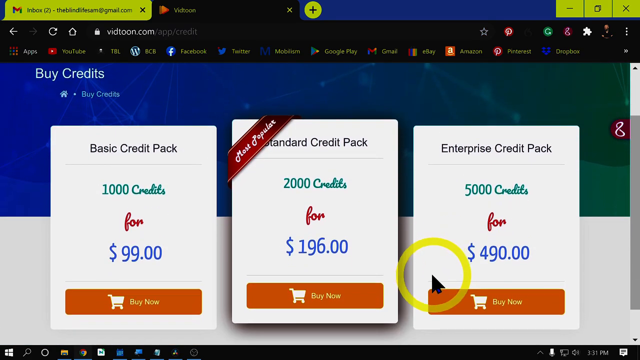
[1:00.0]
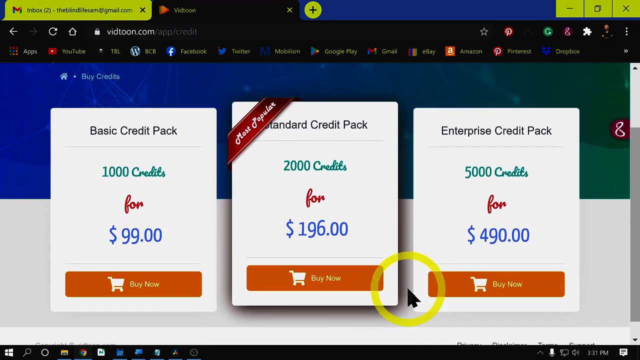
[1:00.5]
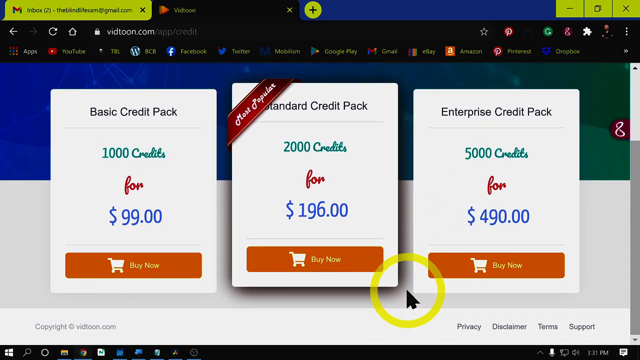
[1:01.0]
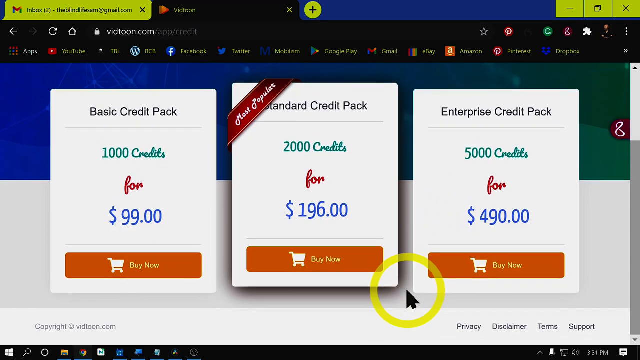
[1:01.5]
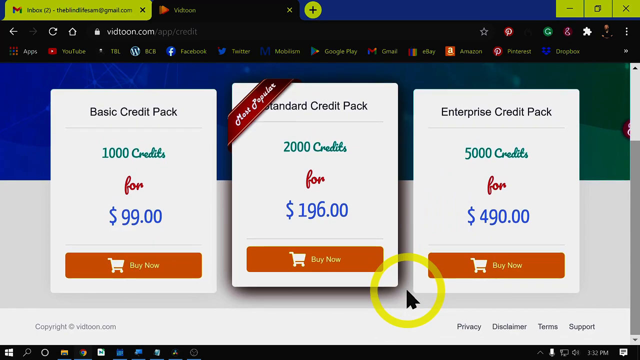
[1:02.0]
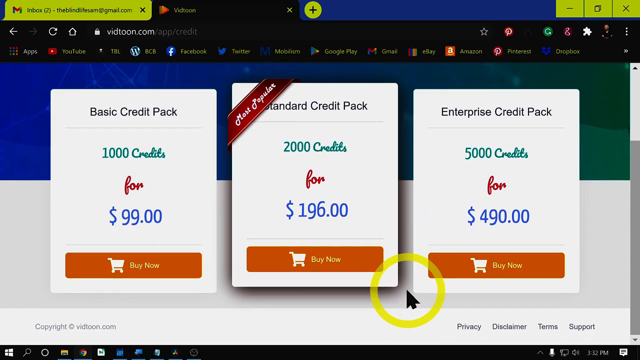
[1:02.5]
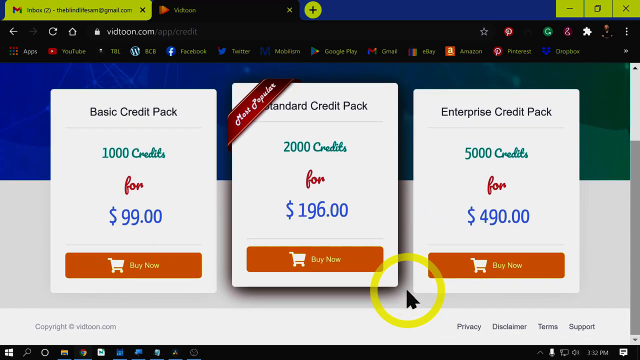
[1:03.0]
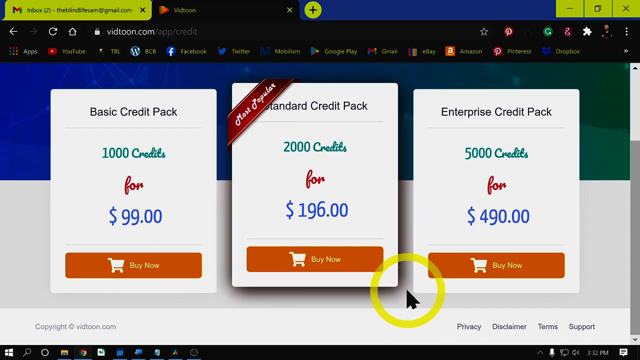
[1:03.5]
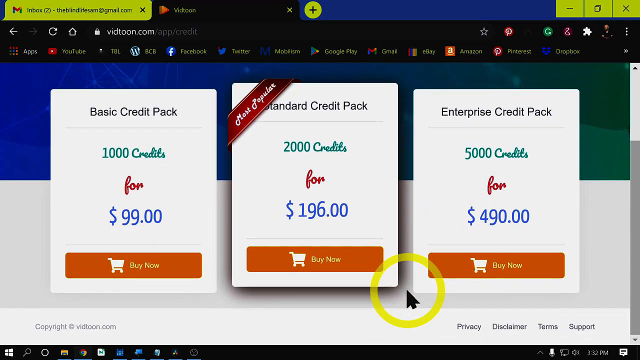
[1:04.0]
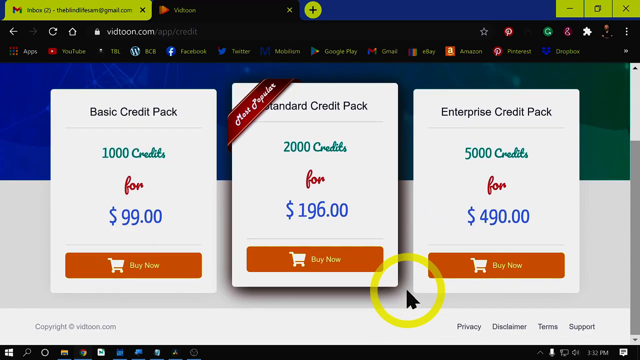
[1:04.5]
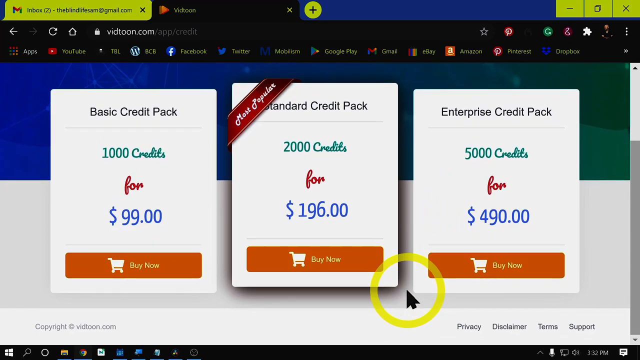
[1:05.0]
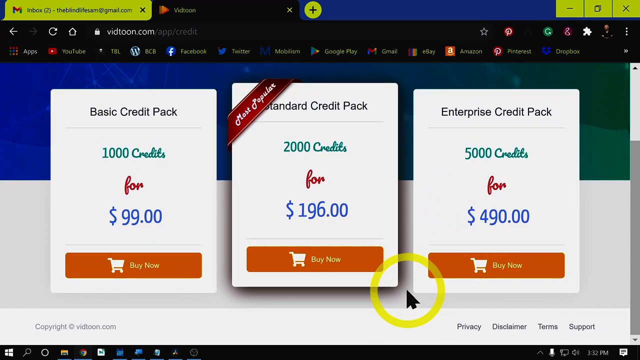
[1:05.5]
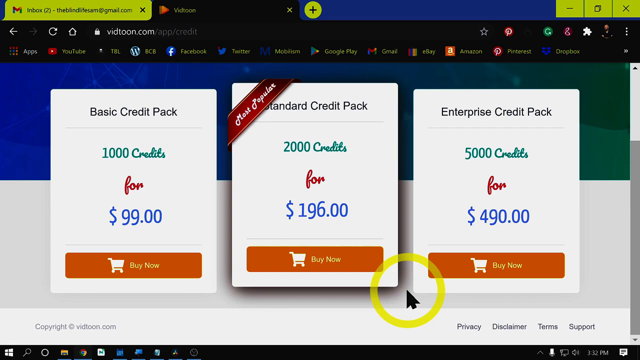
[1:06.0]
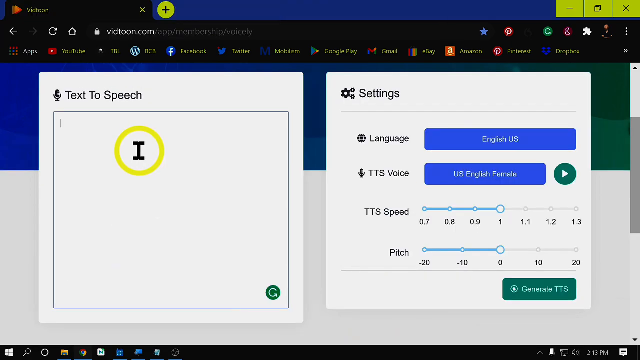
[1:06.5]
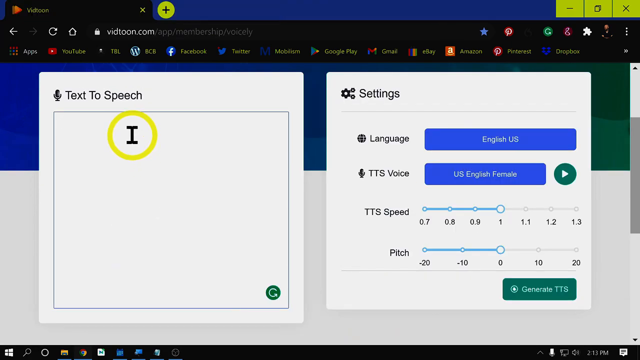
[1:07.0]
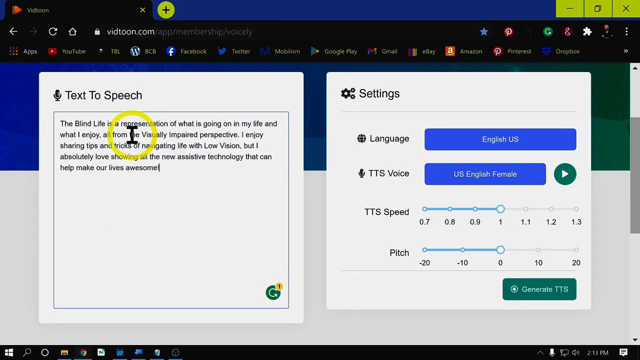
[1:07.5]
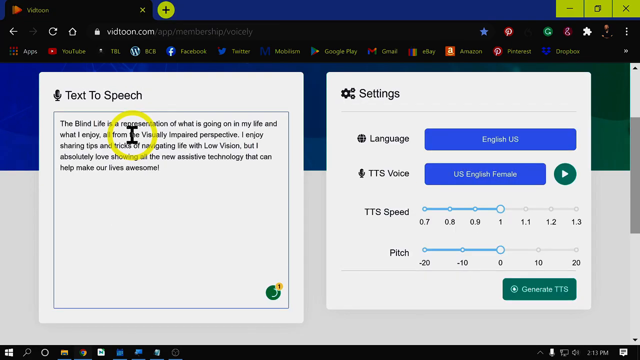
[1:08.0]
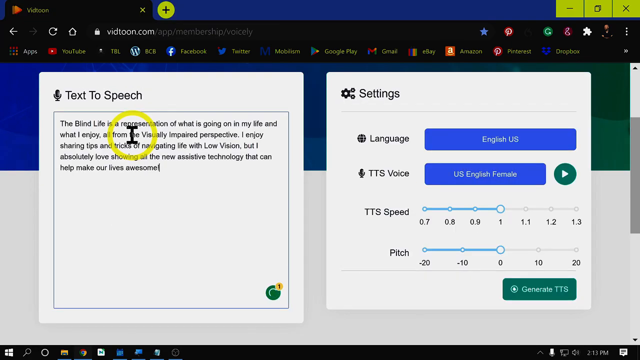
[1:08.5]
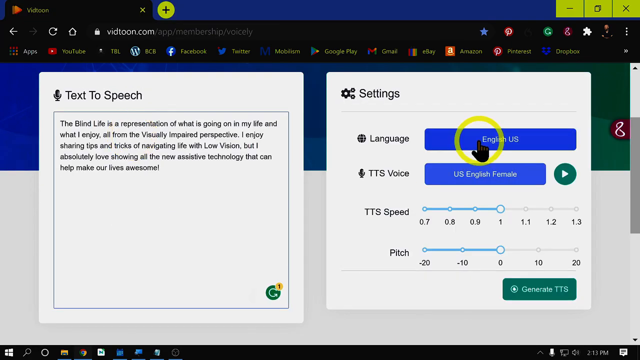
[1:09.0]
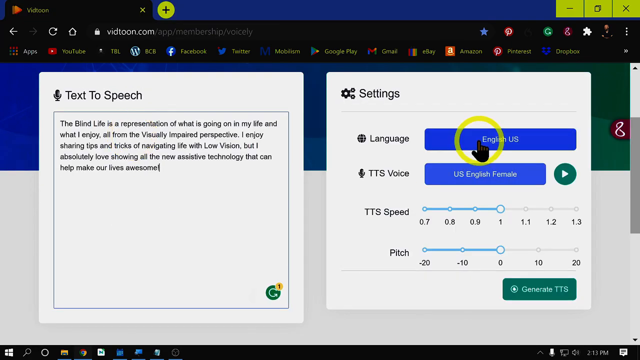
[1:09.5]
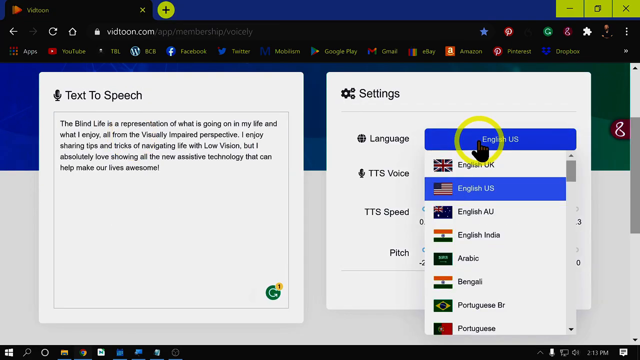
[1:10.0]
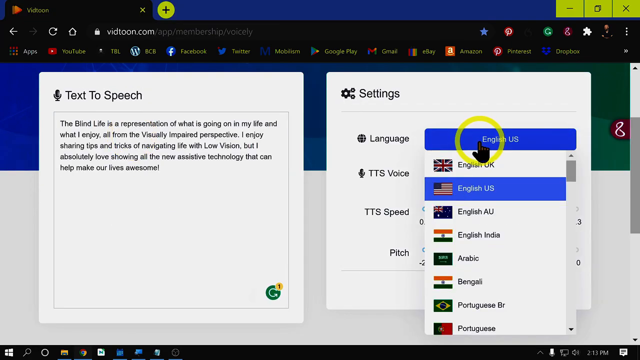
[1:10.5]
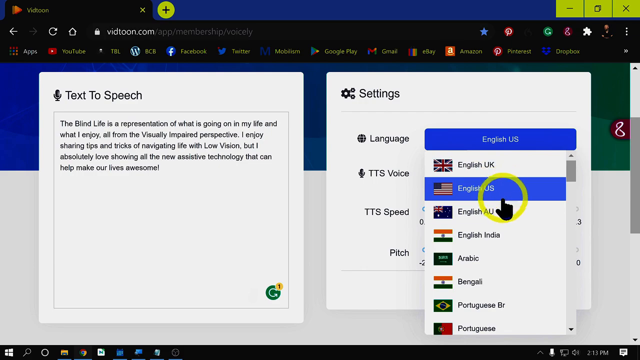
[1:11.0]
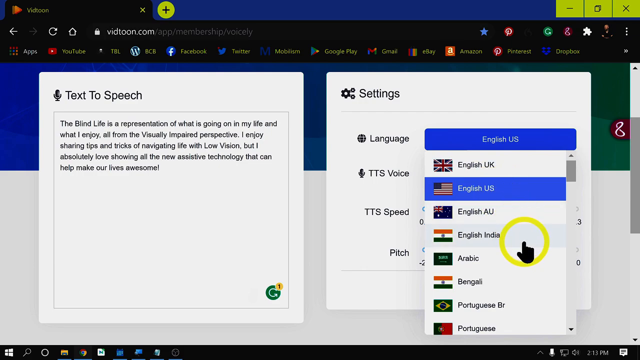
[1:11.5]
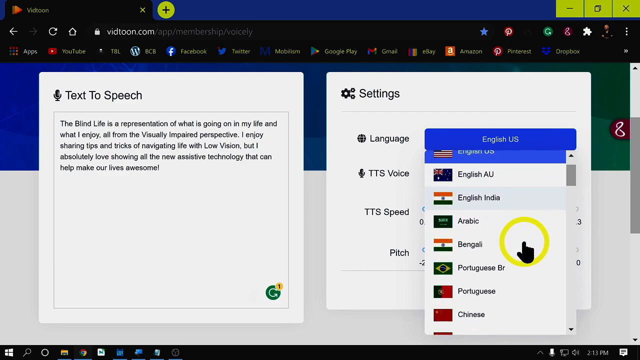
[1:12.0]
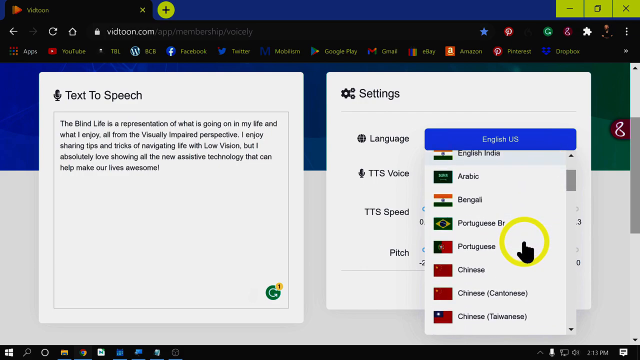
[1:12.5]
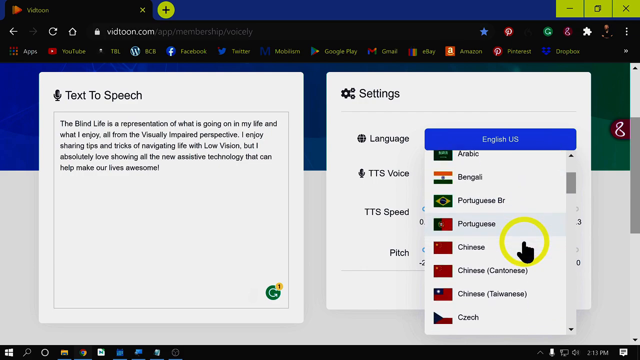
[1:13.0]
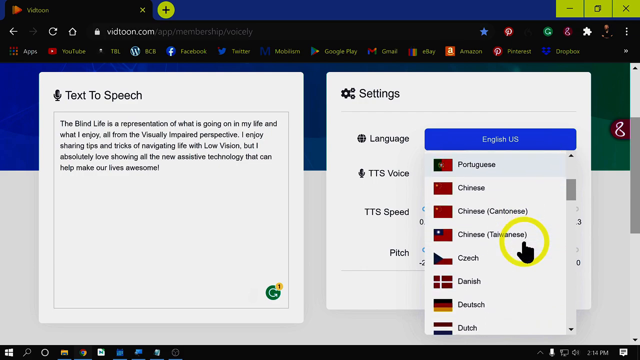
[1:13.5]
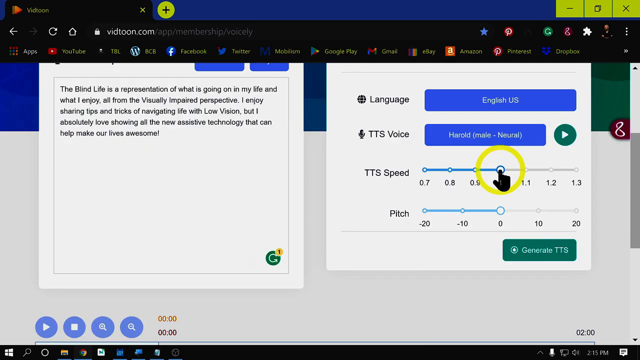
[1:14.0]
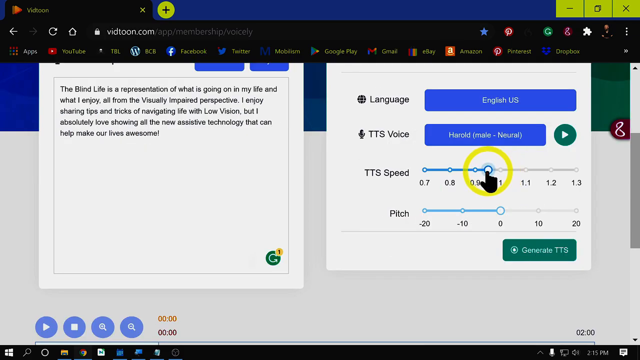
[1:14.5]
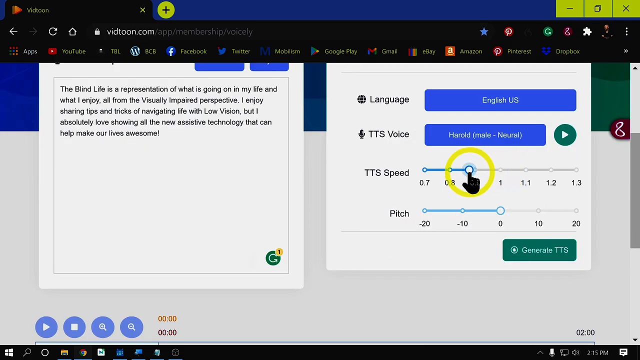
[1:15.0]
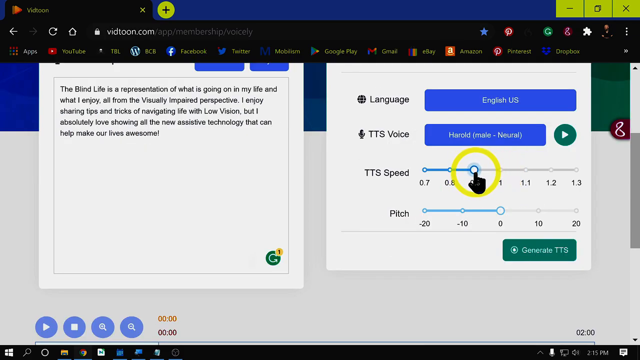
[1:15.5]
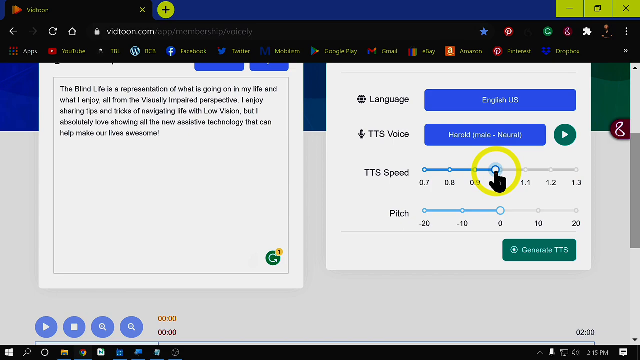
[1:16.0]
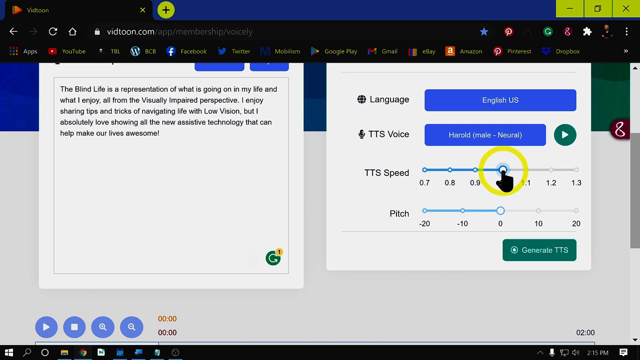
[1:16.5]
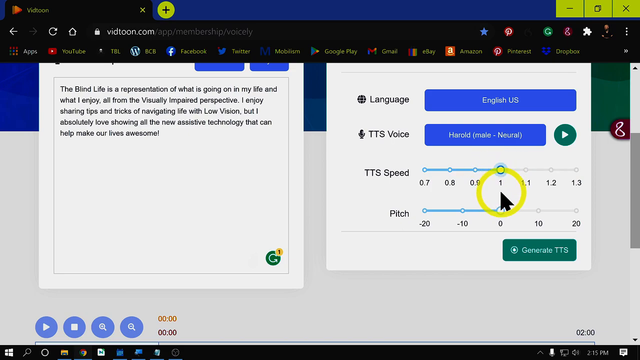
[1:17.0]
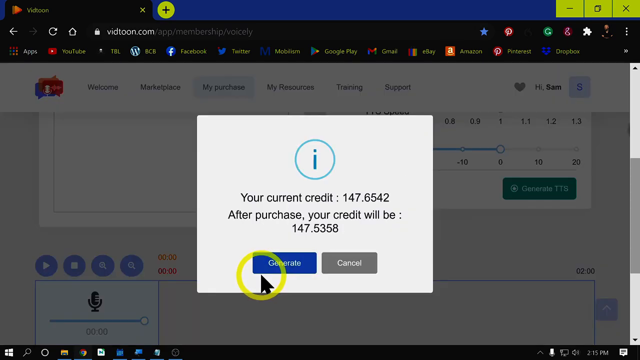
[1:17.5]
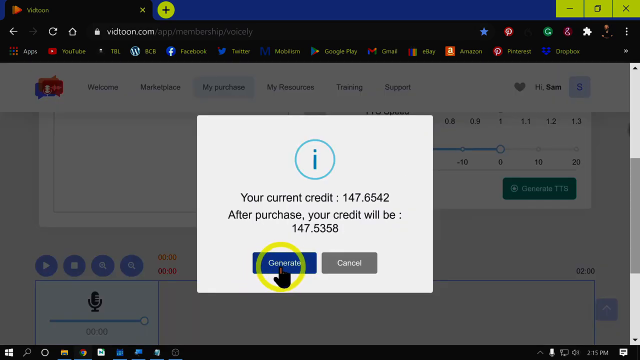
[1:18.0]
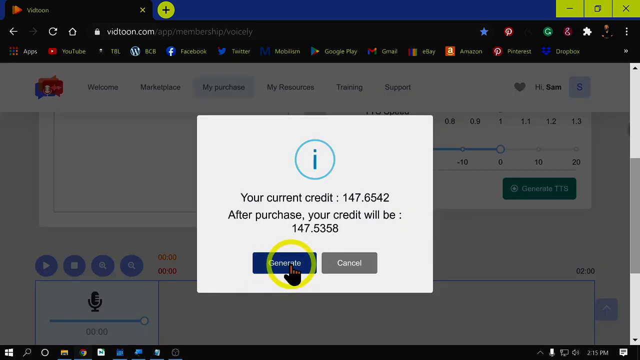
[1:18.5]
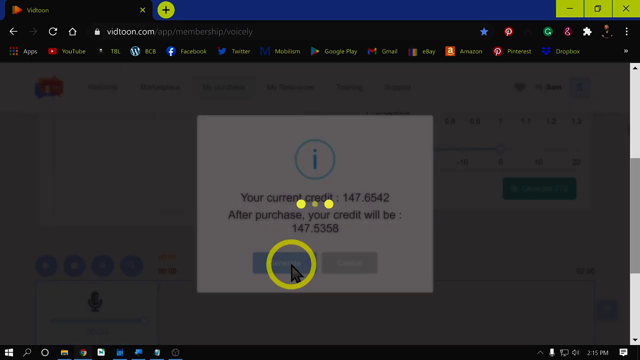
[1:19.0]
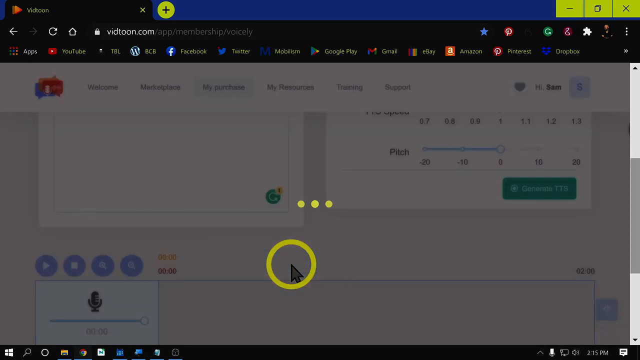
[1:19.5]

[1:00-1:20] A screen shows three different credit packs. On the left is the Basic Credit Pack, 1000 credits for $99, with a Buy Now button underneath. In the middle, marked as the most popular, is the Standard Credit Pack, 2000 credits for $196, with a Buy Now button underneath. On the right is the Enterprise Credit Pack, 5000 credits for $490, with a Buy Now button underneath. The cursor is now an arrow instead of a hand, still inside a large yellow circle. It hovers, but it is unclear whether any option is selected. The view returns to the screen with the text-to-speech box on the left and the settings box on the right. The user clicks in the text-to-speech box and the same Blind Life text appears. The cursor moves to settings and language; the user clicks the dropdown, scrolls through different languages, and eventually selects English US. Then the cursor moves down to the TTS speed selector. A pop-up message appears in the middle of the screen with a letter i inside a circle, and underneath it says "your current credit 147.6542. After purchase your credit will be 147.5358." The user moves the cursor to the generate button and clicks it.